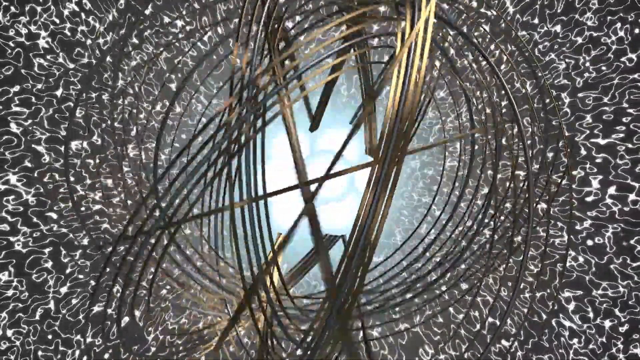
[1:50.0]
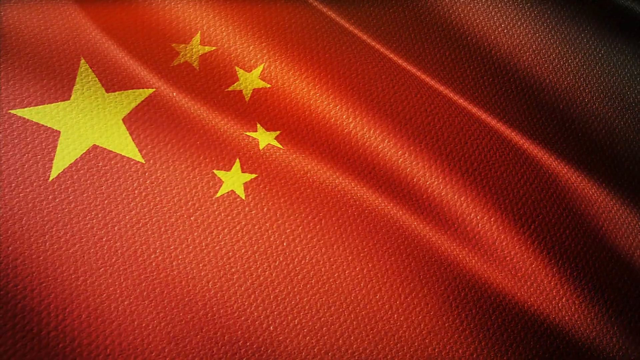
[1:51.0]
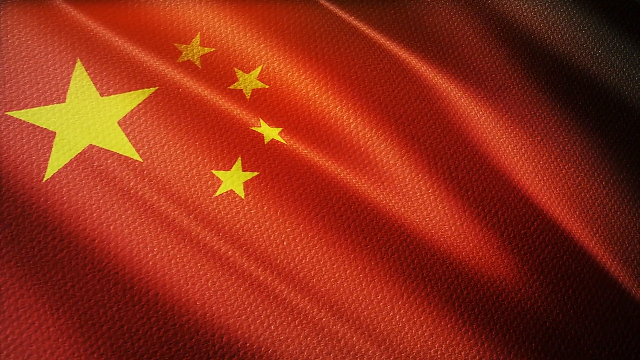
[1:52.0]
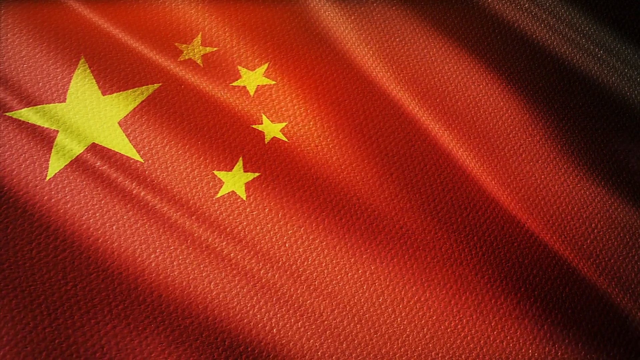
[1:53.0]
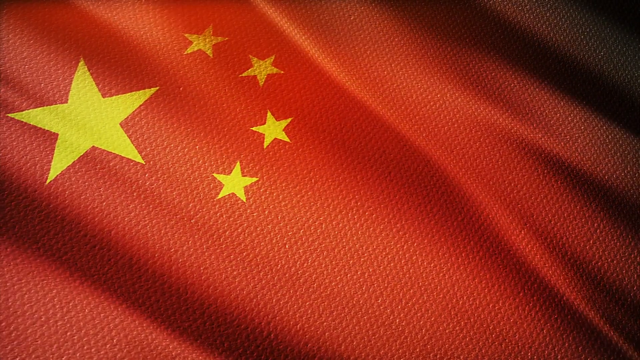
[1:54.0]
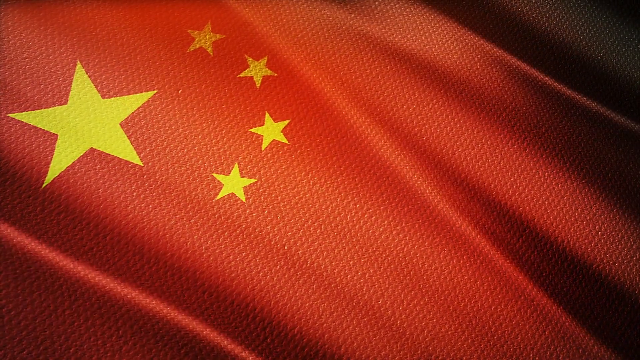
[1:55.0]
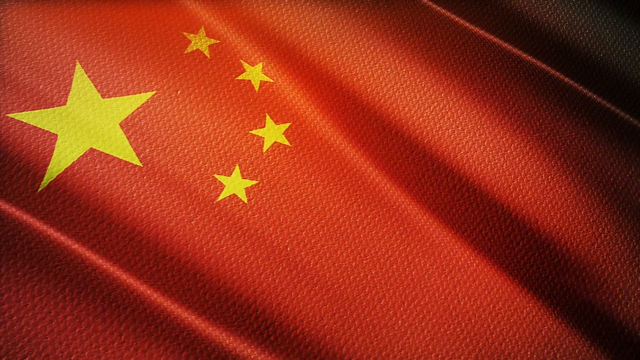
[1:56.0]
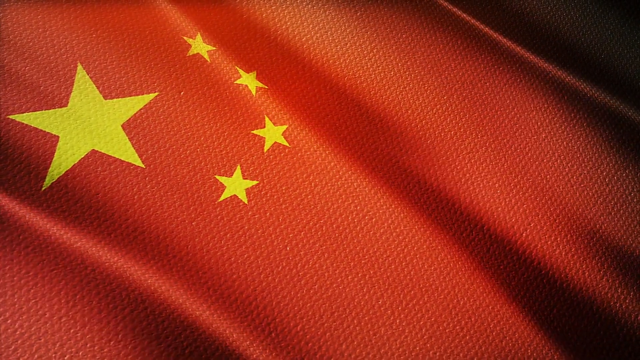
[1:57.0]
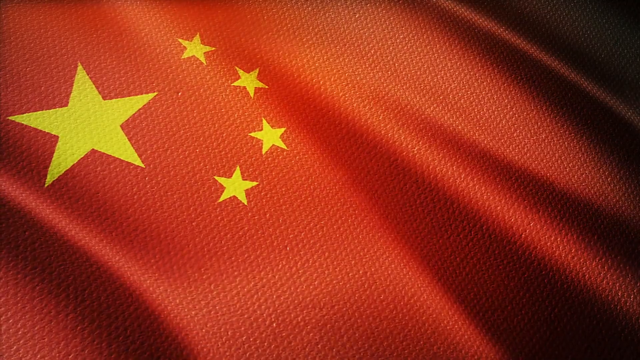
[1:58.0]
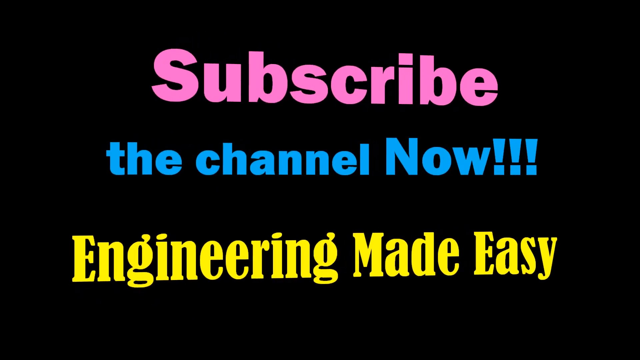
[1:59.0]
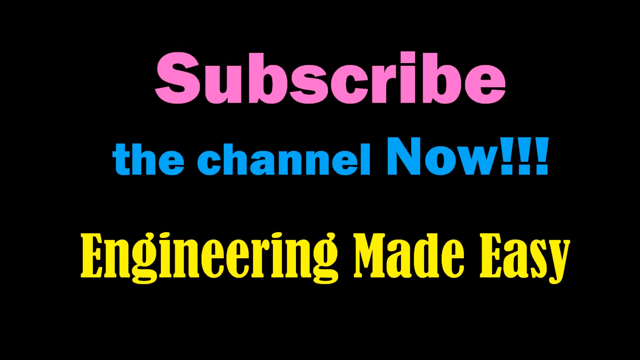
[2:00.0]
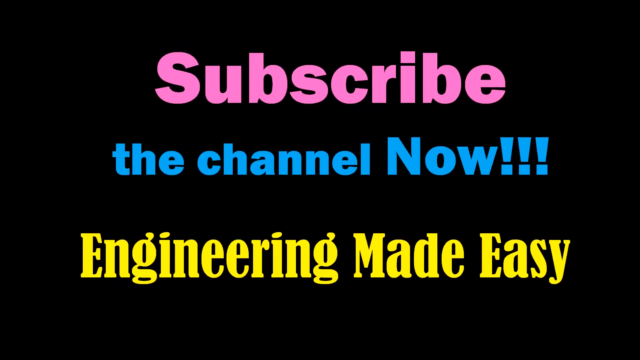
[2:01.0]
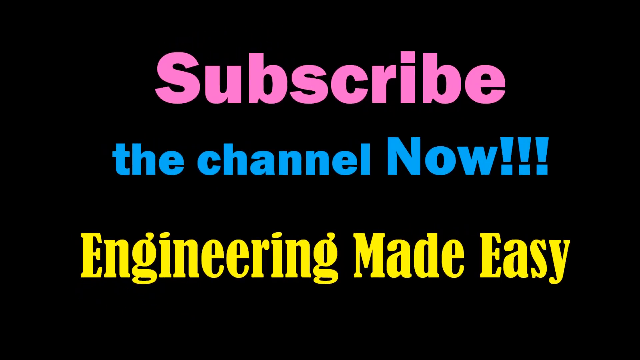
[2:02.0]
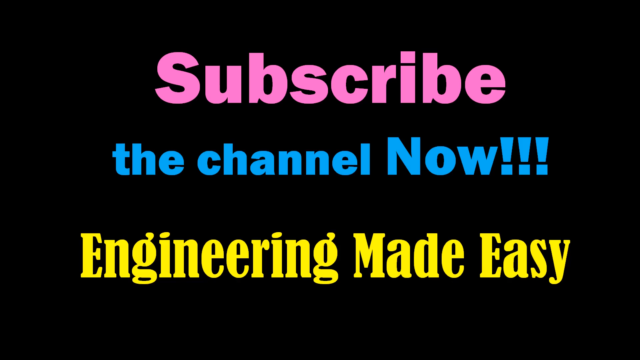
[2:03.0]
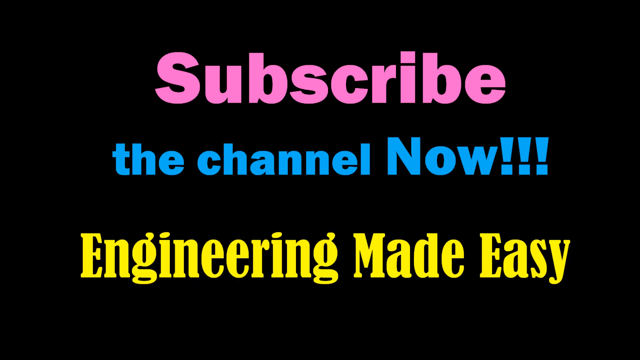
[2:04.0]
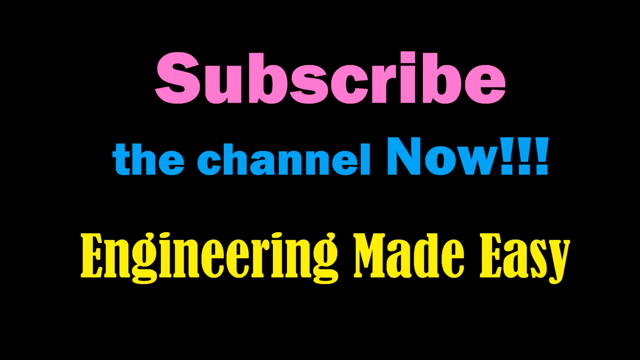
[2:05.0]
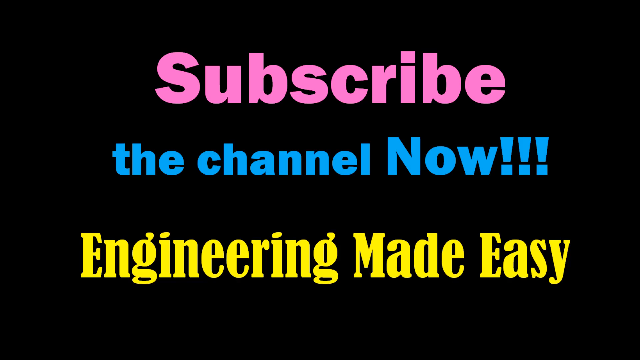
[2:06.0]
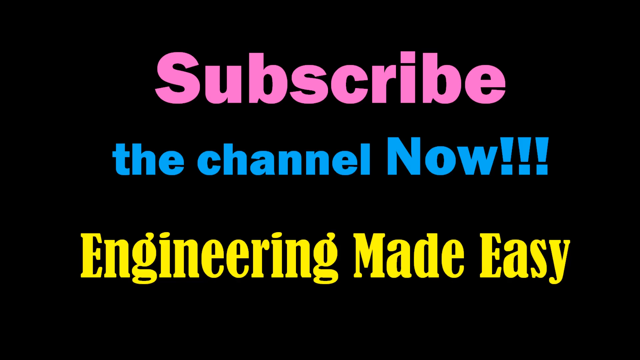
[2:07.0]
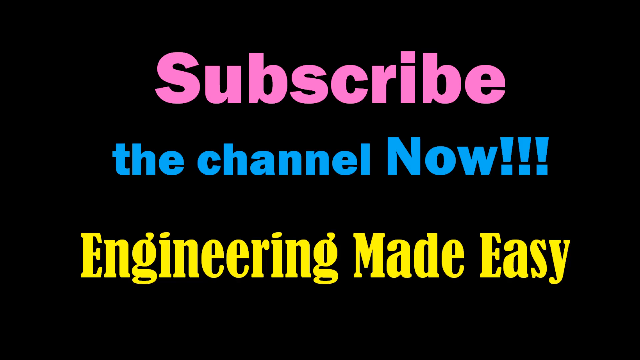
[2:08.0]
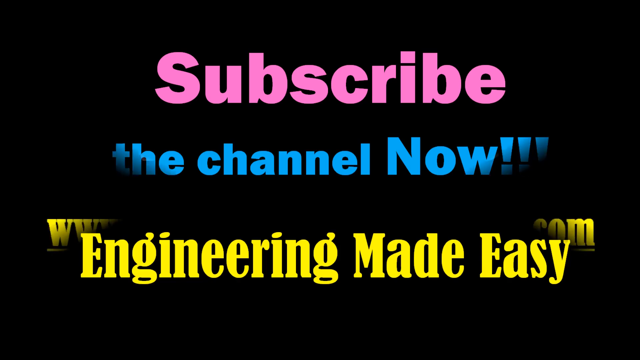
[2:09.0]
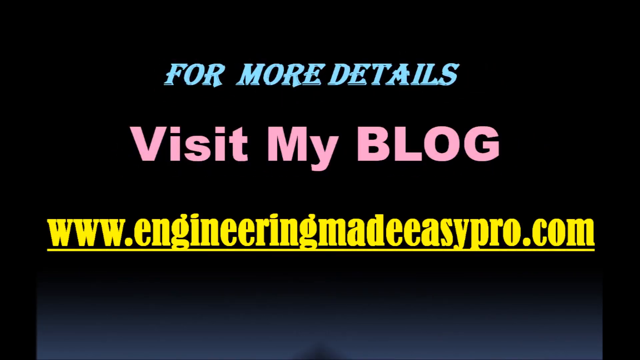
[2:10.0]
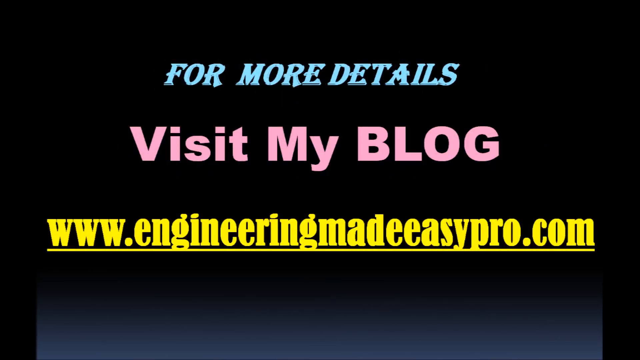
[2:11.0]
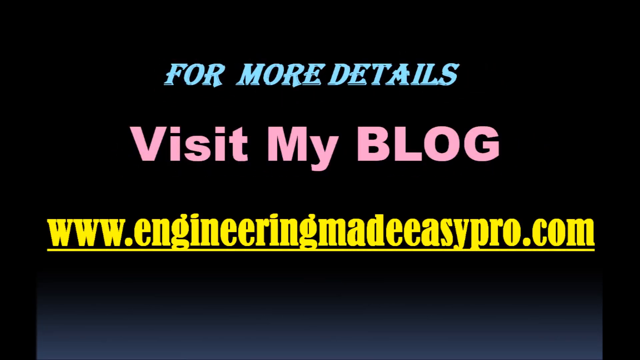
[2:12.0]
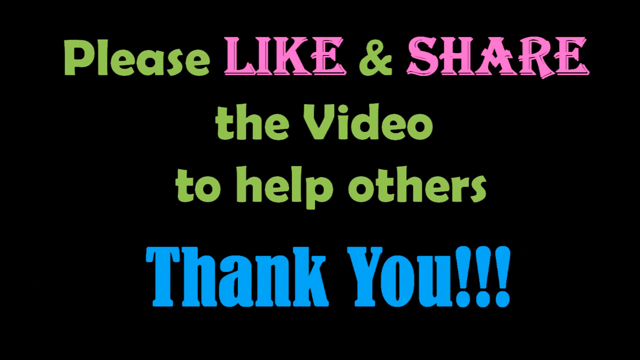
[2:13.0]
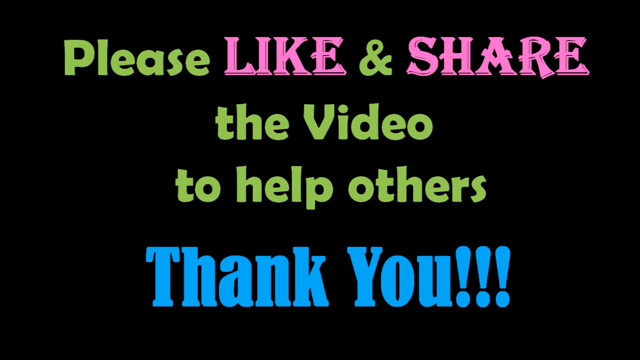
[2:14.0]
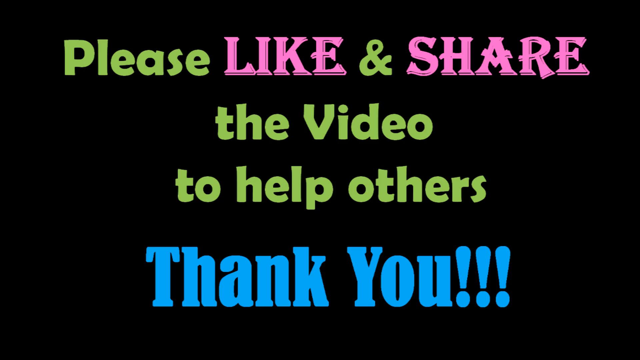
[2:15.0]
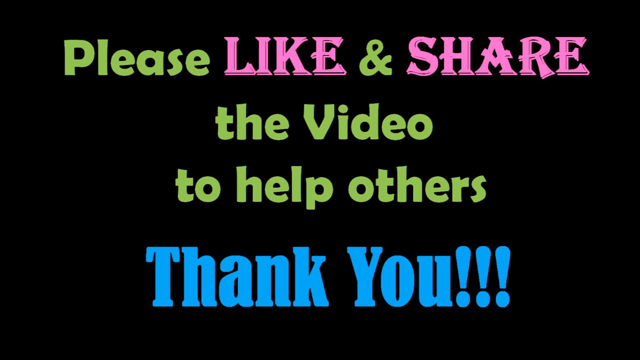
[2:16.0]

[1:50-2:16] Six small light blue-white balls are kind of bunched up on each other like molecules, with a blue and white hue around their outer edge. Copper coils in complete circles, almost like a separated slinky, twist and turn around each other, with a black and white pattern around the outside. The video cuts back to the close-up of the red Chinese flag again, zoomed in very close and waving a little, with the yellow star in the top left corner and four smaller yellow stars to its right; the flag and stars wave as if blowing in the wind. Then an all-black background appears with "subscribe" across the top in pink, "the channel now" below it in blue, and "engineering made easy" below that in yellow. This wipes in from the outside edge toward the center and clears away. Then "for more details" appears across the top in blue, "visit my blog" below it in pink, and below that the web address "www.engineeringmadeEasypro.com". Next is "please like, share the videos to help others," with "like" and "share" in pink and the rest in green, and at the bottom "thank you" in blue with three blue exclamation points.